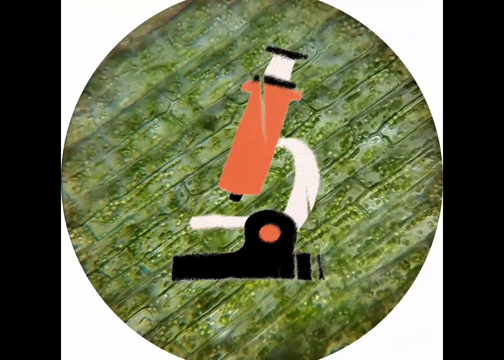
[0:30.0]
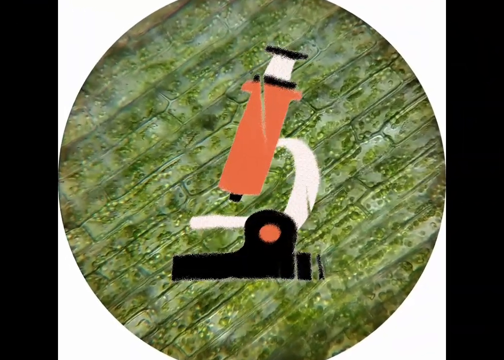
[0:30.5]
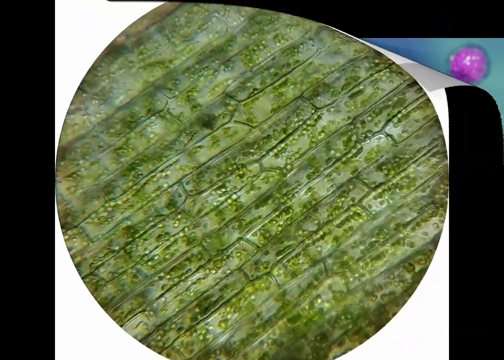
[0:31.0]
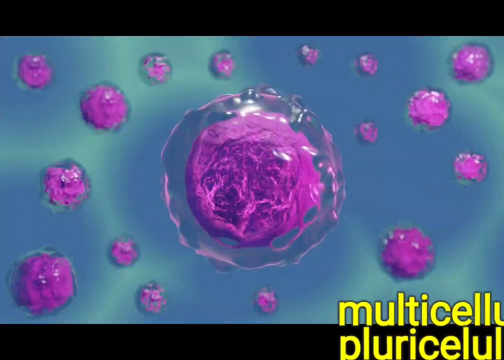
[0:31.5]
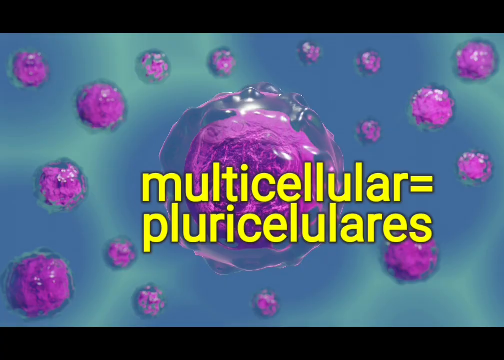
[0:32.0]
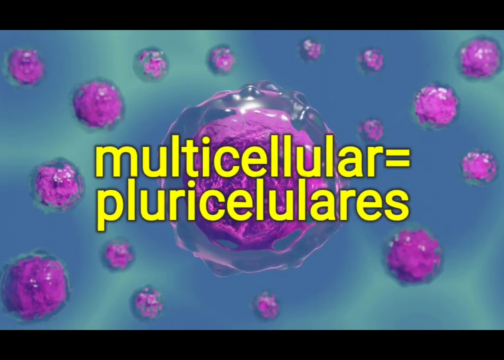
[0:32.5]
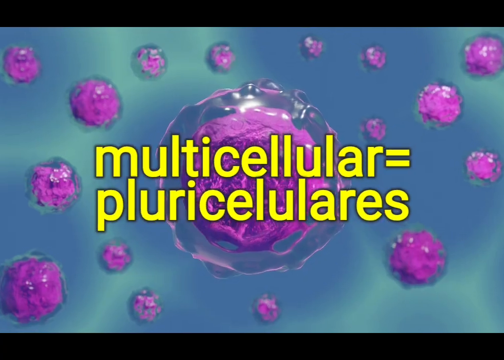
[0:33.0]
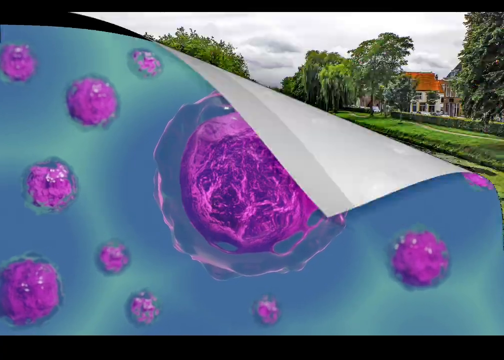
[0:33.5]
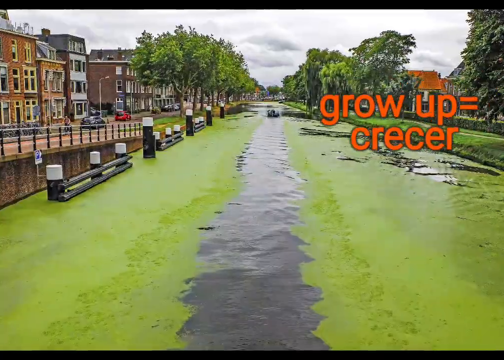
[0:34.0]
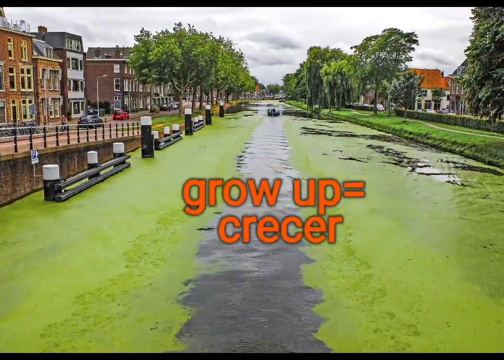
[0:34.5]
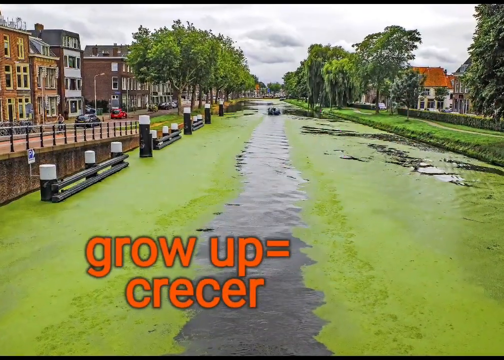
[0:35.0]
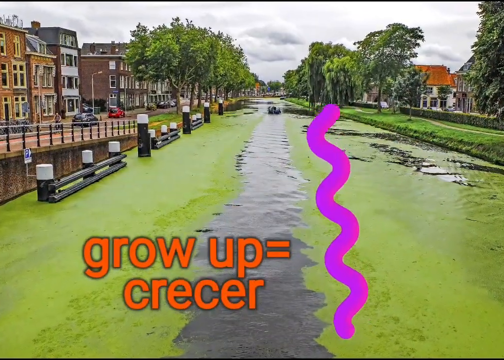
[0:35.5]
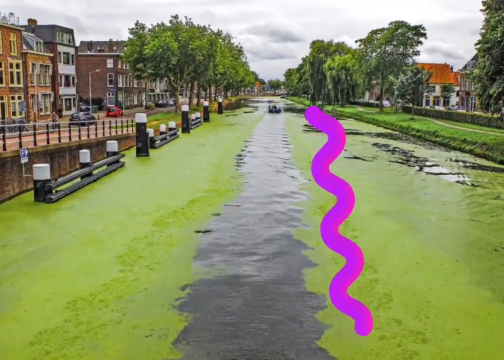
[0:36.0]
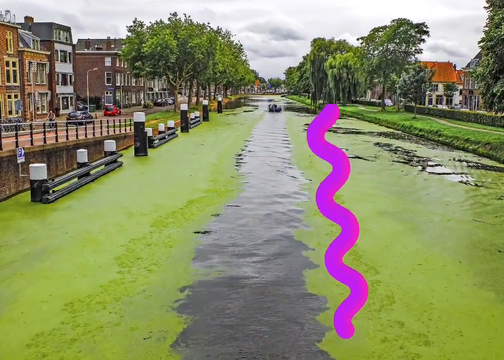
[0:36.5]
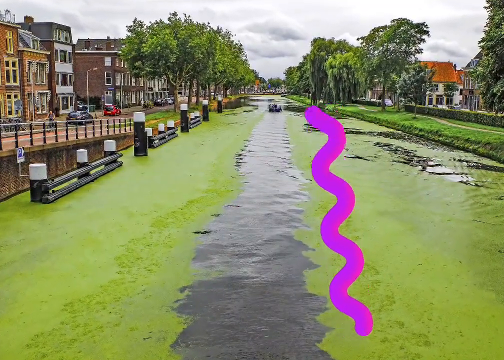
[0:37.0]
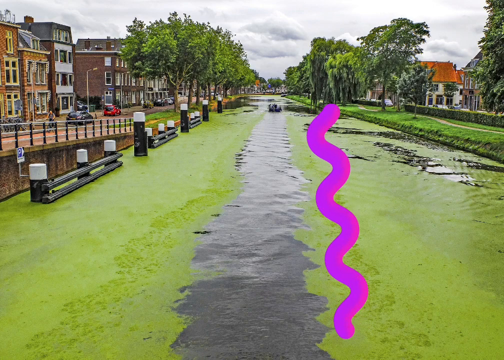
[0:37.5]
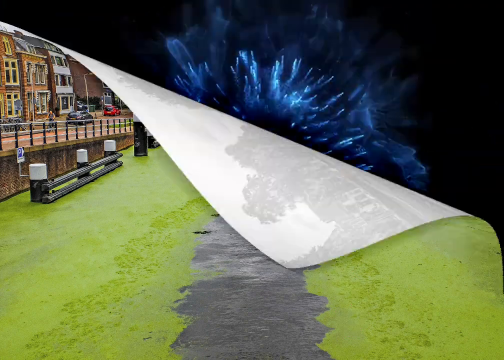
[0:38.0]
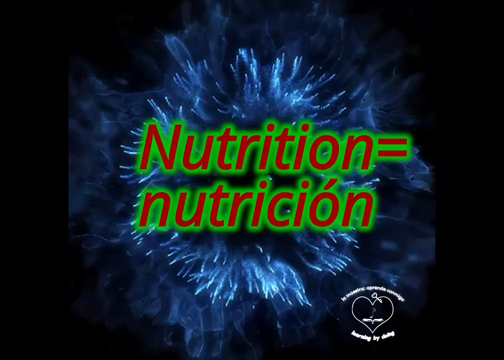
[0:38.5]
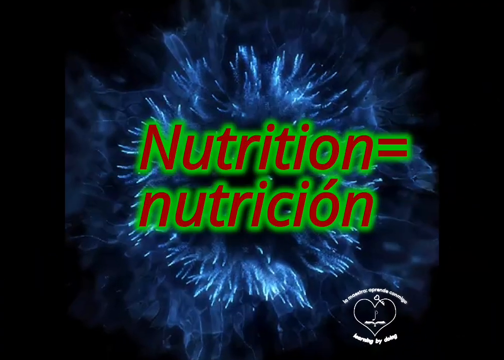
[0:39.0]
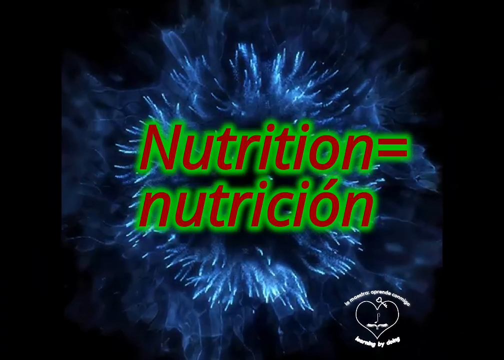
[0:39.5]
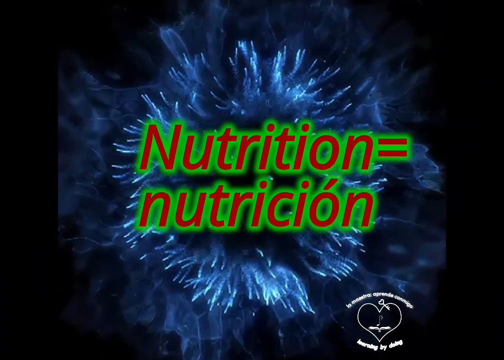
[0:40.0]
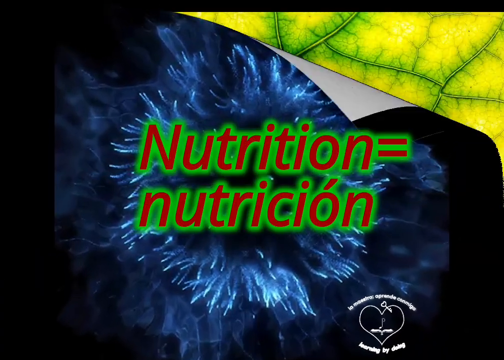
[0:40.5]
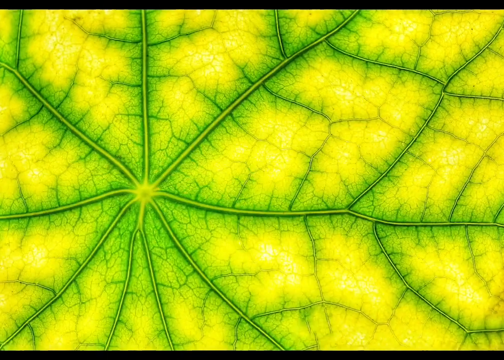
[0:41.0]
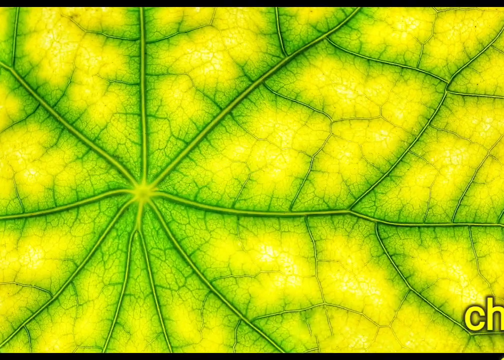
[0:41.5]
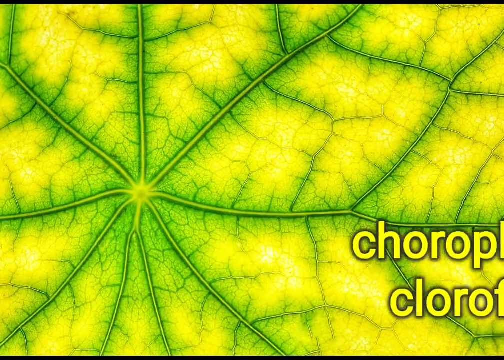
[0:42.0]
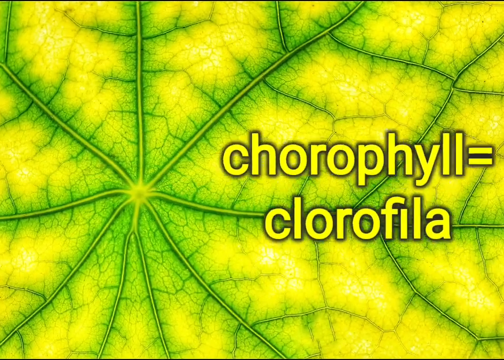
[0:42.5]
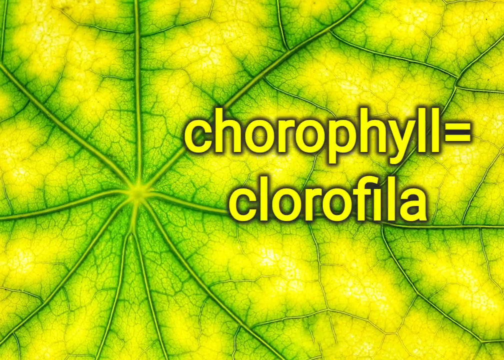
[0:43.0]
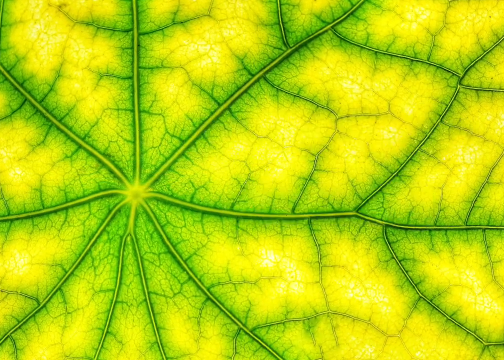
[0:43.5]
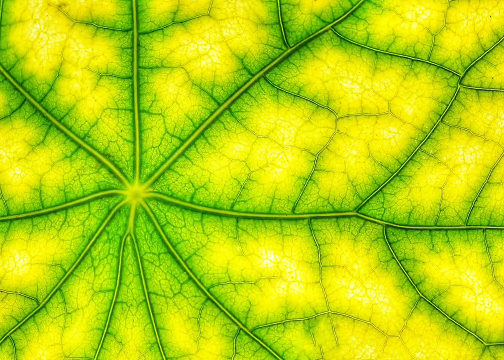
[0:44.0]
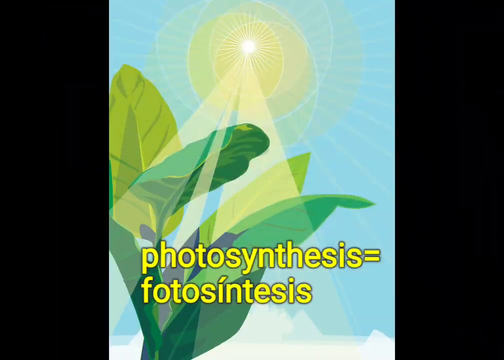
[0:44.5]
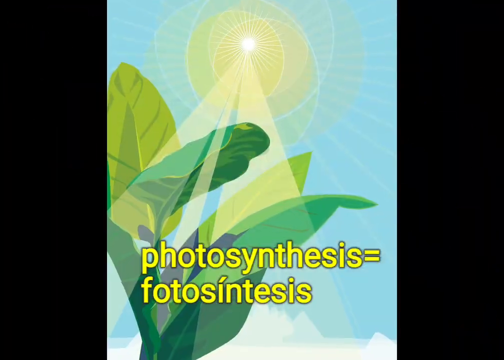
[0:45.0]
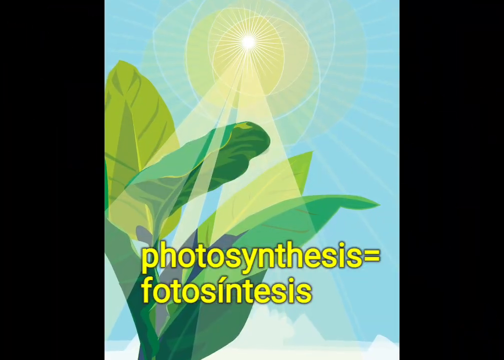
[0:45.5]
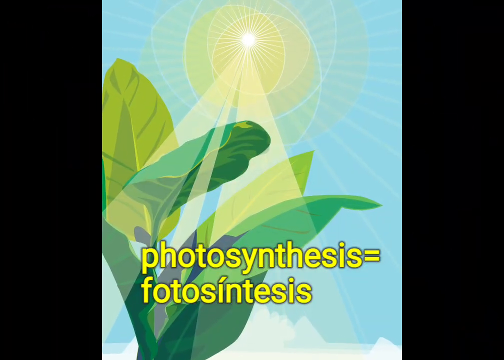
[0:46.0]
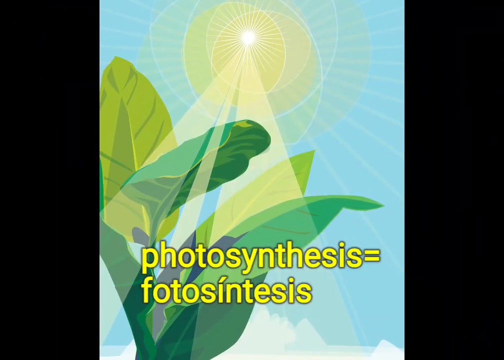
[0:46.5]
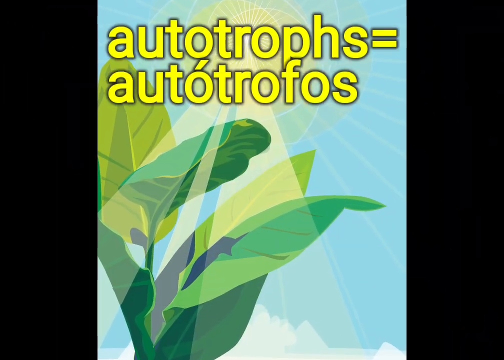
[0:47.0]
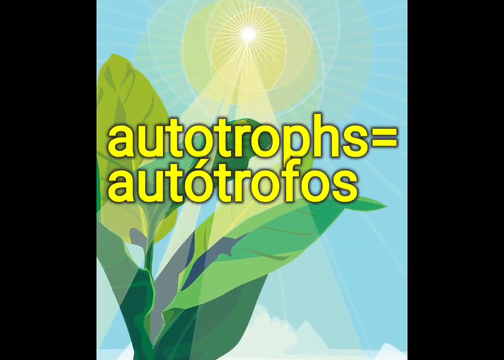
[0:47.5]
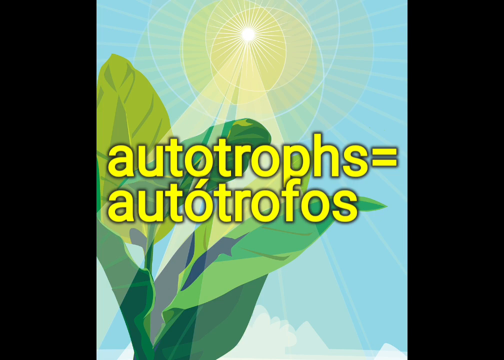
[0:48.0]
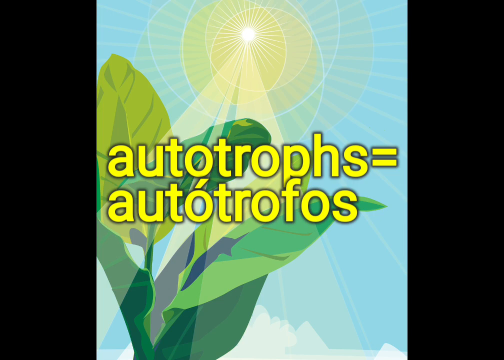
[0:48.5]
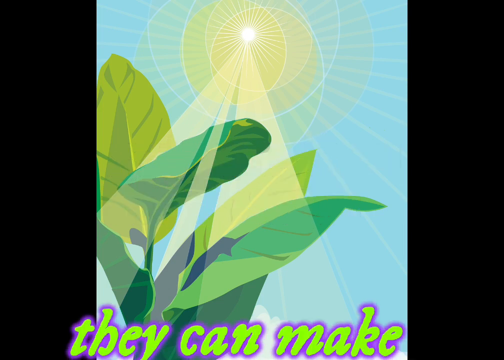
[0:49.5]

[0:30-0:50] The video speeds up as it covers multicellular microorganisms and how they get nutrition, including chlorophyll, the process of photosynthesis, and autotrophs, showing how the microorganisms get their coloring and energy. There are a lot of graphics that visually show these processes.